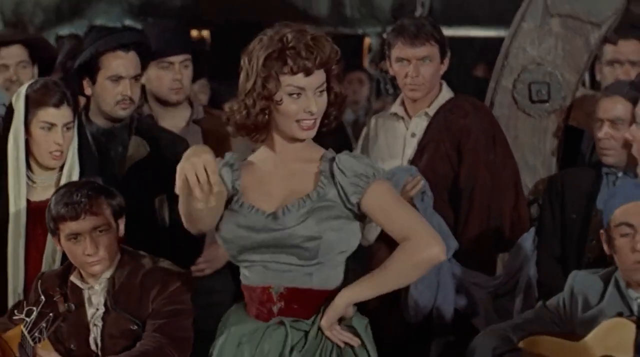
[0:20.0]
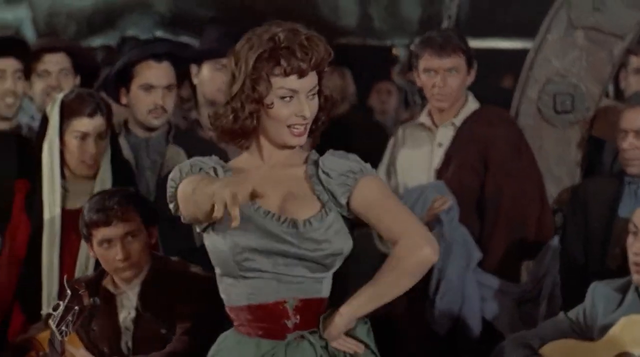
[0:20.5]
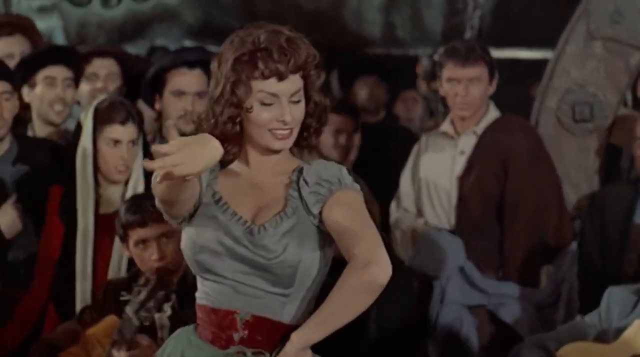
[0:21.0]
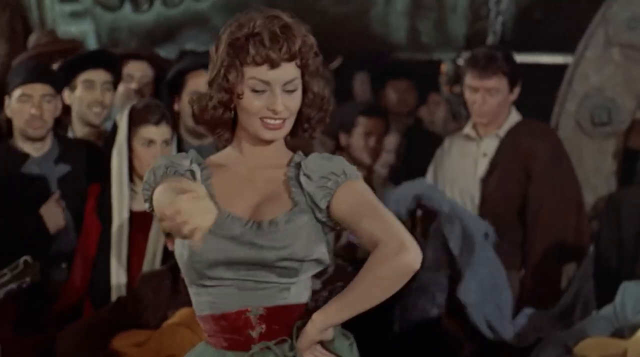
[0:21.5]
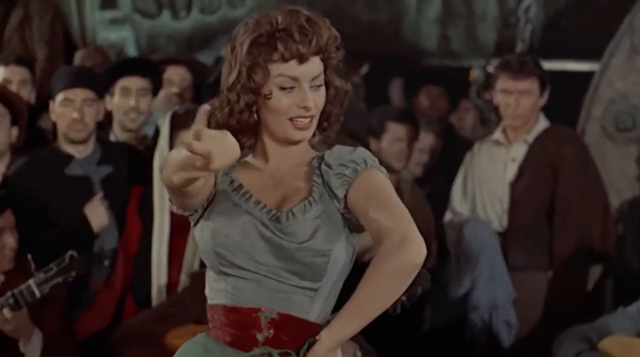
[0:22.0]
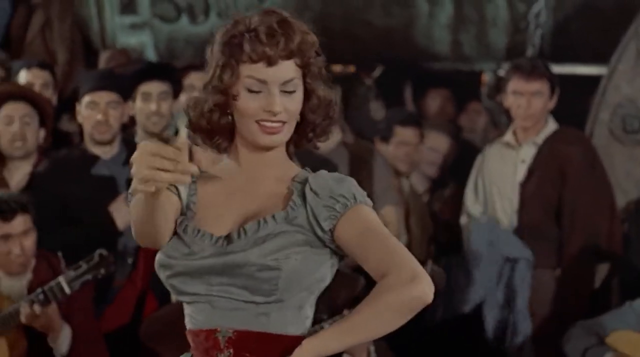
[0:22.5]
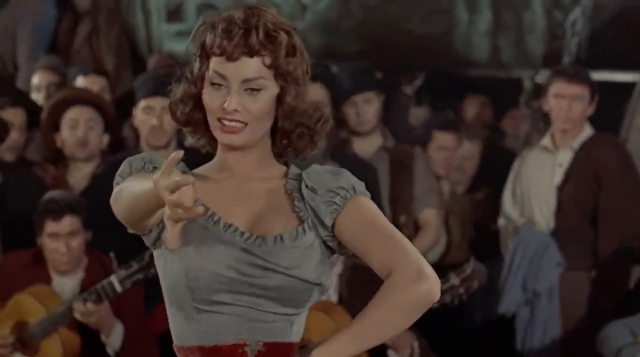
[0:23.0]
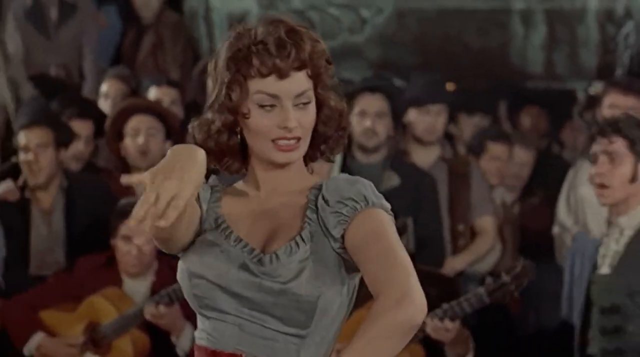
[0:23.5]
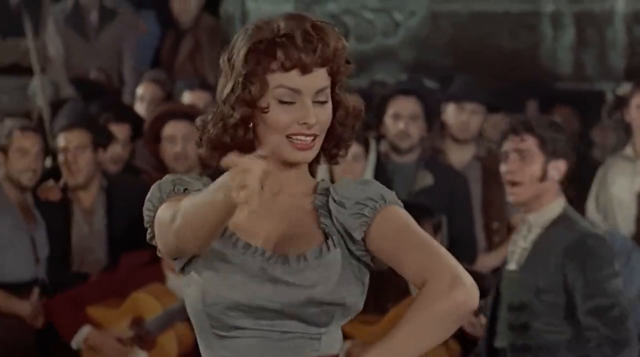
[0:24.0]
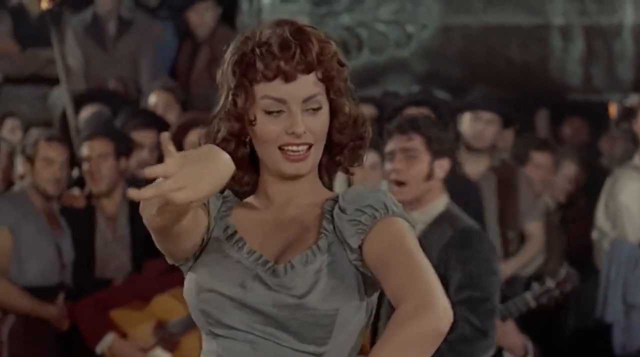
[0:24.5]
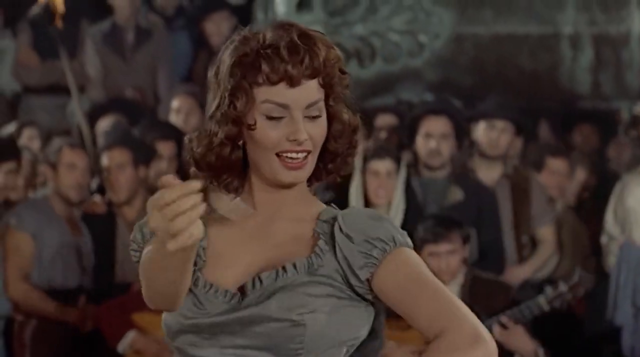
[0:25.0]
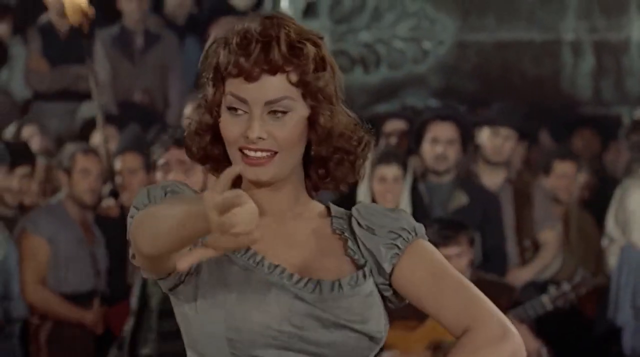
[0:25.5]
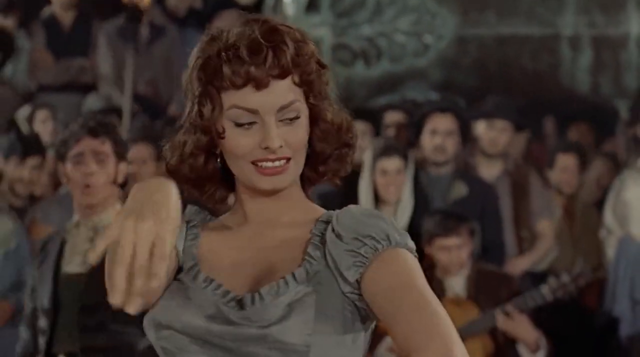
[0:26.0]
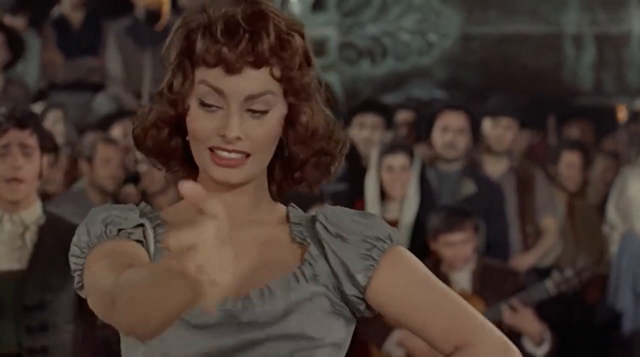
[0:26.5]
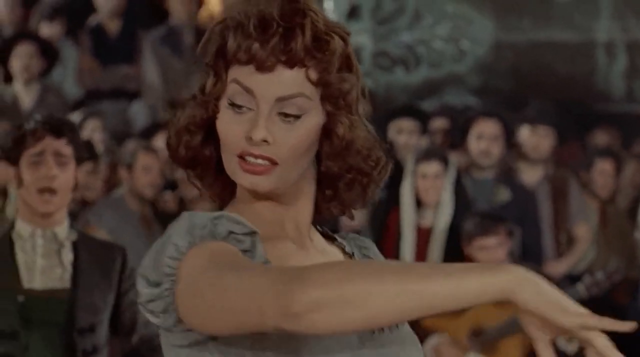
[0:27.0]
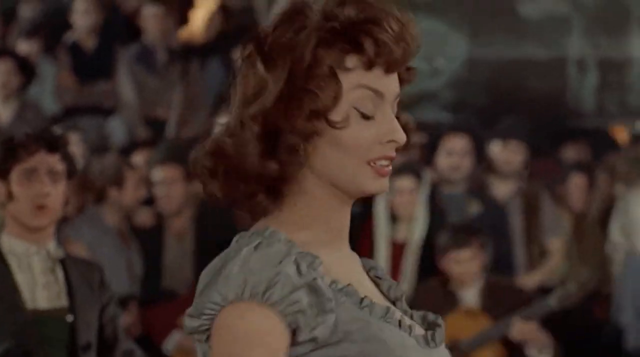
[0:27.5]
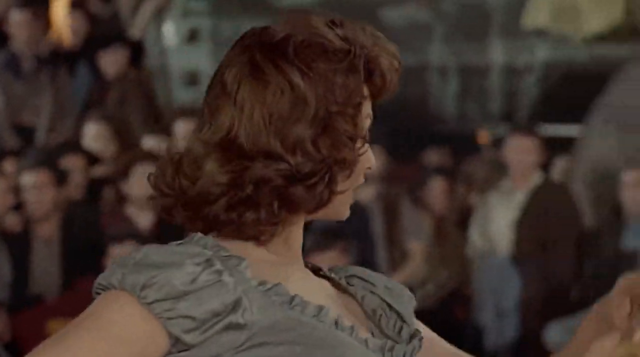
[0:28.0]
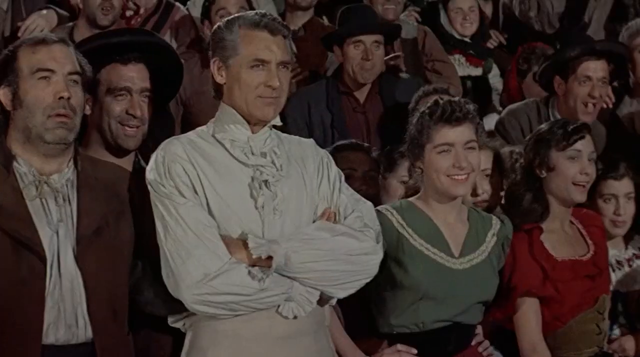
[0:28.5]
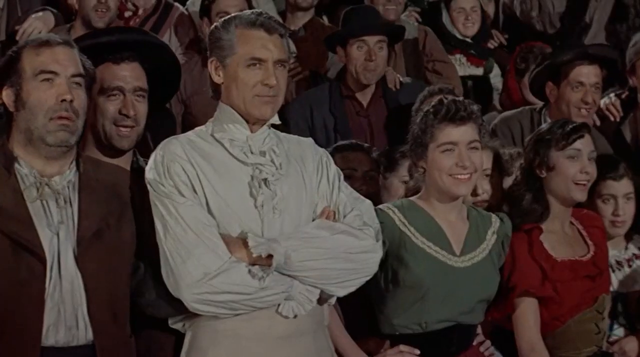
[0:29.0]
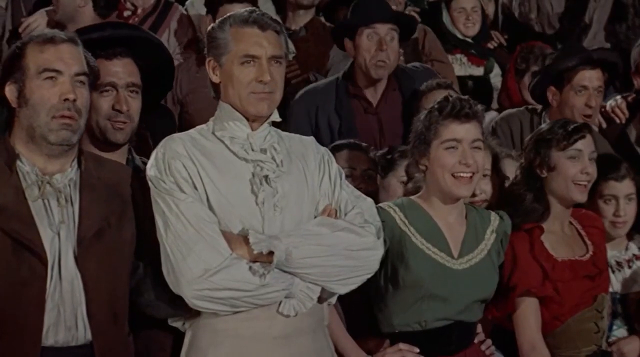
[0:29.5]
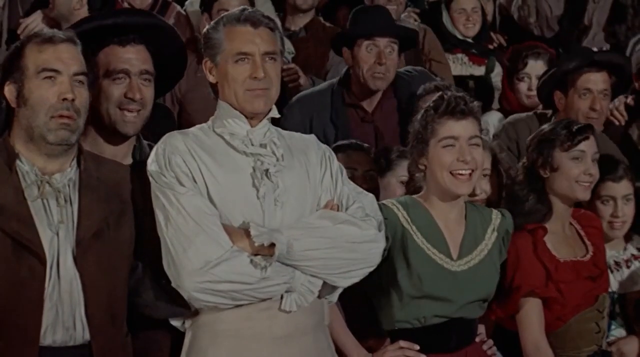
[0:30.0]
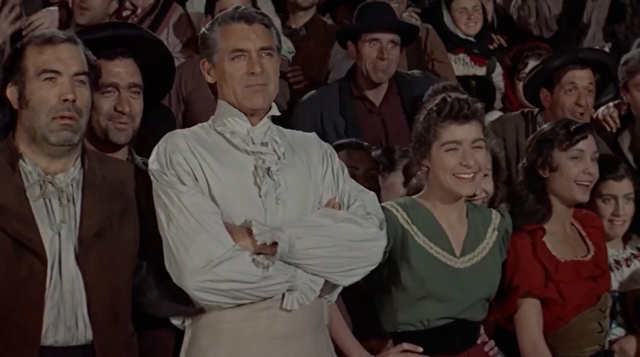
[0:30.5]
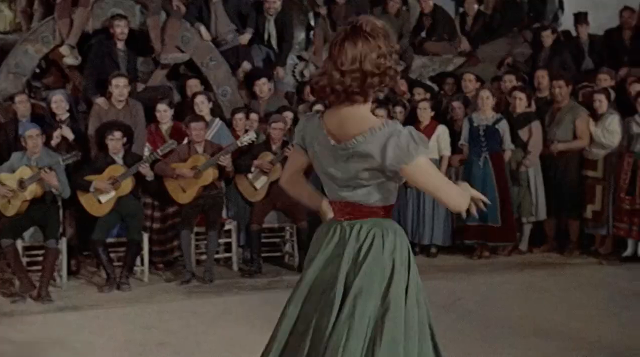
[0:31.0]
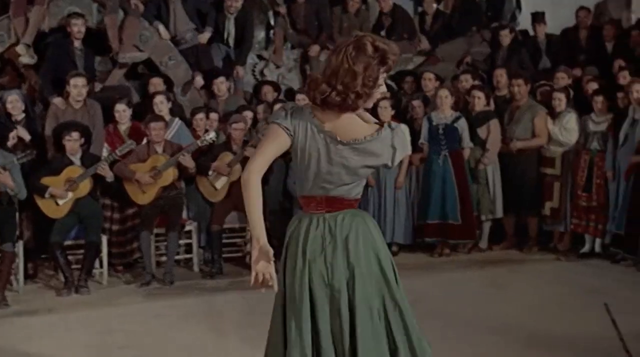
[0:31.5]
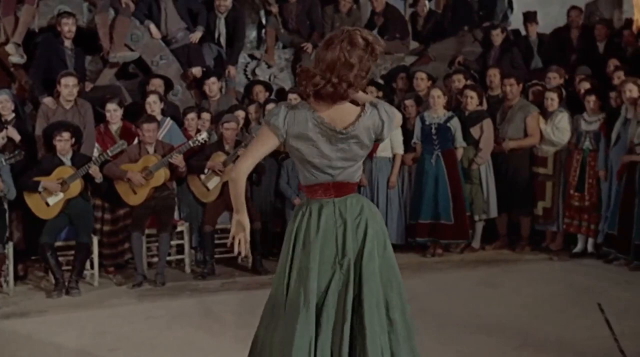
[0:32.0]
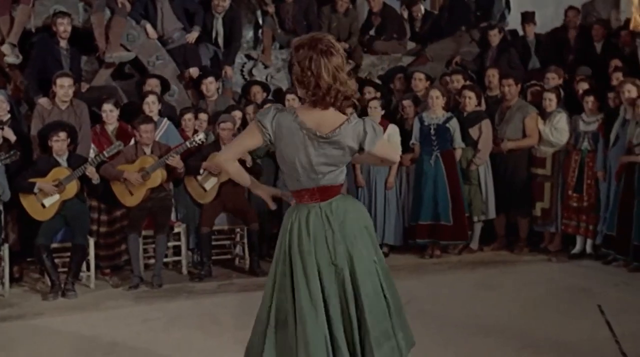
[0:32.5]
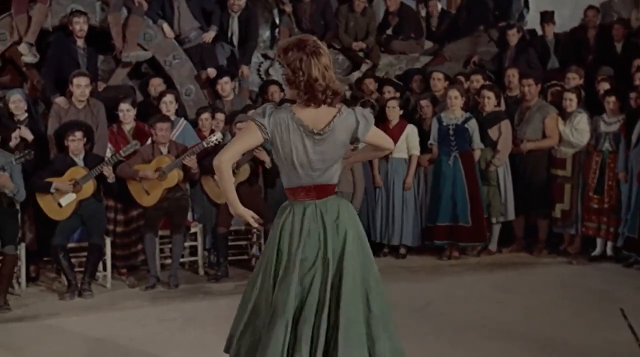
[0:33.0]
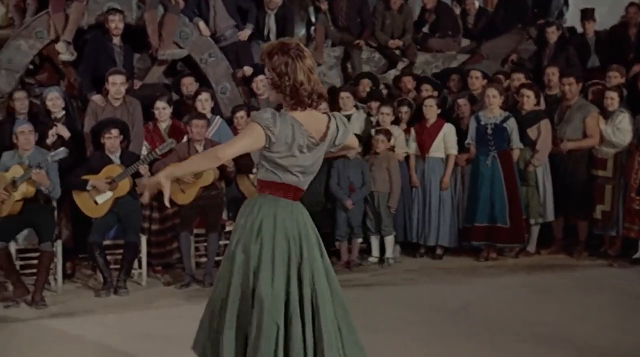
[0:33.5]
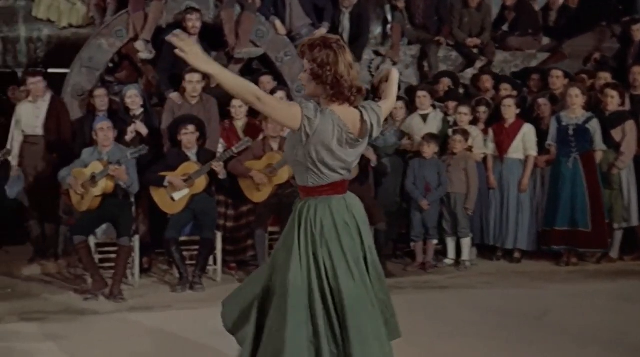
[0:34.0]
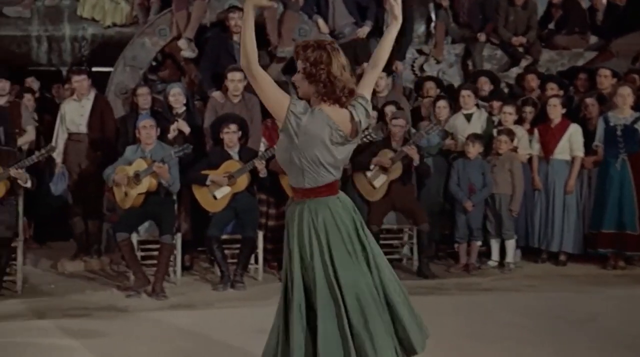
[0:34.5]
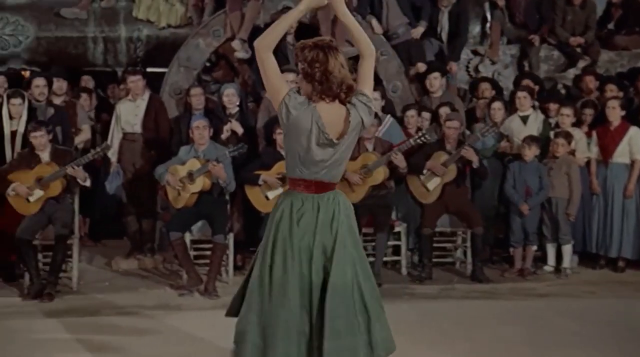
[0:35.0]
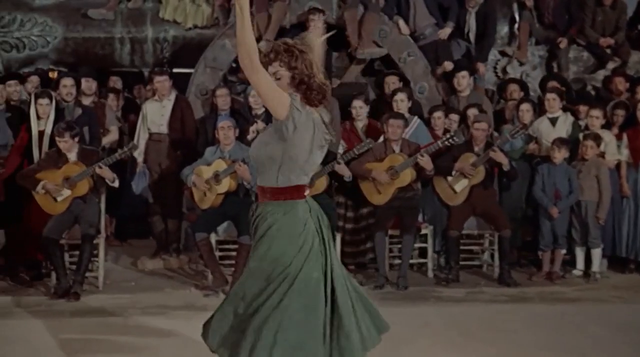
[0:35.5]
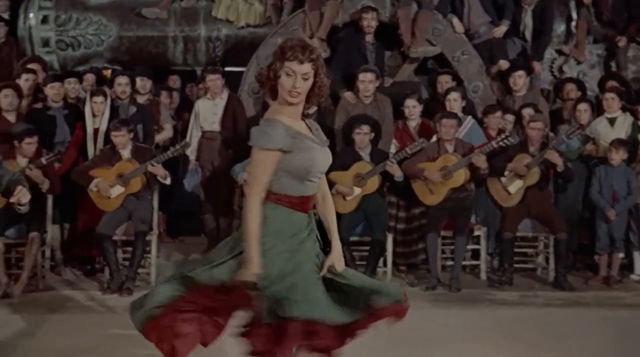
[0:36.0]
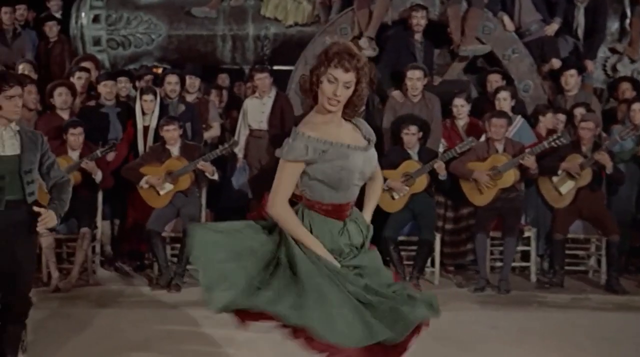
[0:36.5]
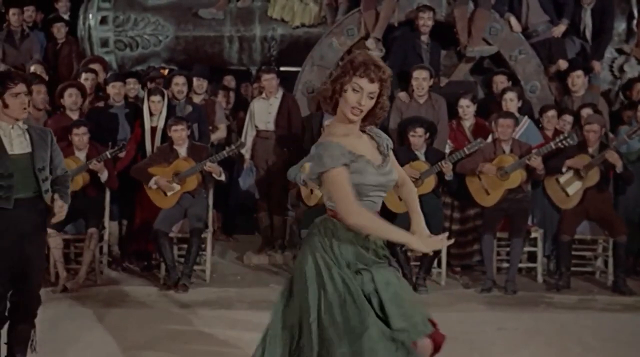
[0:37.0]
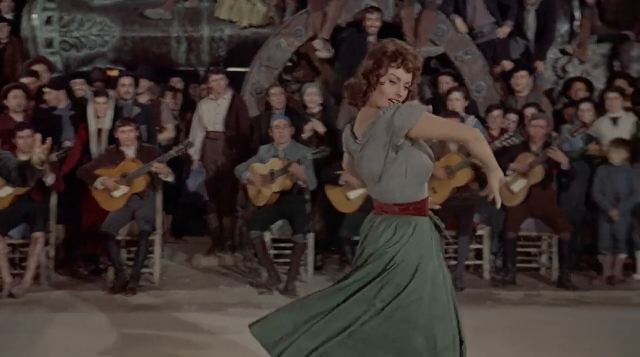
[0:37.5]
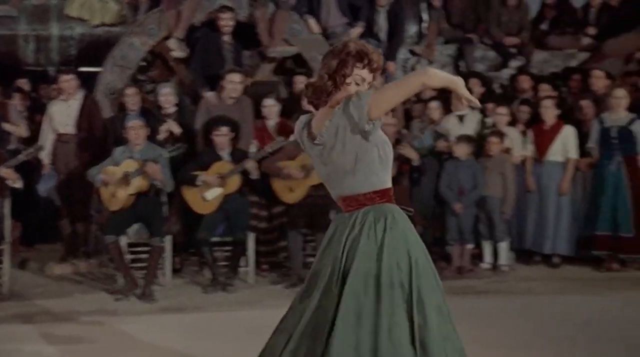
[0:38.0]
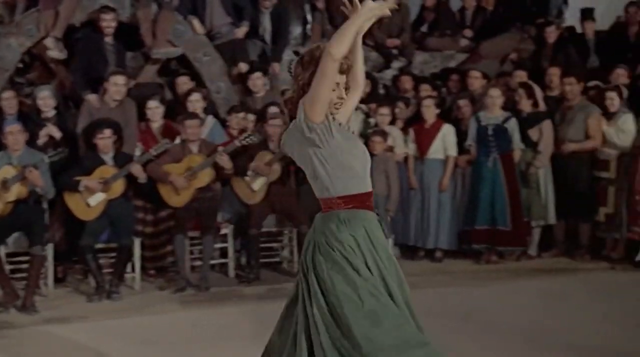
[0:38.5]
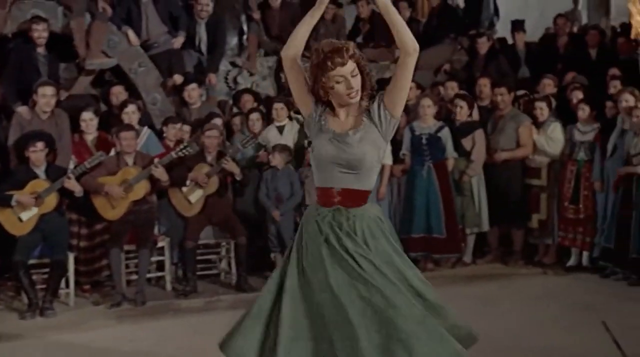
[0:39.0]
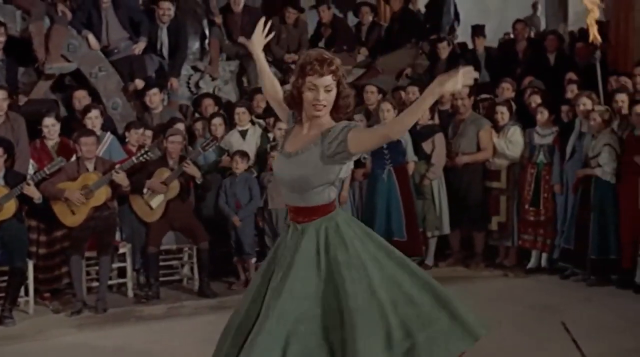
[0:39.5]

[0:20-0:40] The woman dances, playful with the audience and the camera, in what seems to be some kind of flamenco-type dance. There are too many people in the audience to count. Most seem to be enjoying the dance: most are smiling and some are laughing. One man in a white shirt in particular seems to be enjoying the show more than the others. The woman's partner, also in the crowd, wears a white shirt with a brown jacket over one shoulder. He does not look very happy and seems to be getting jealous of the attention she is getting from everyone, especially the man in the white shirt. Other people are simply enjoying the show, and the woman appears to be enjoying herself.